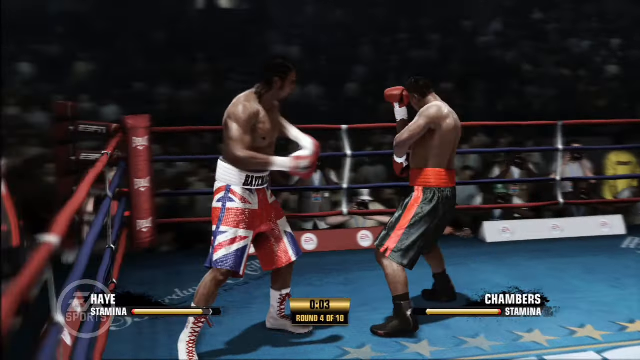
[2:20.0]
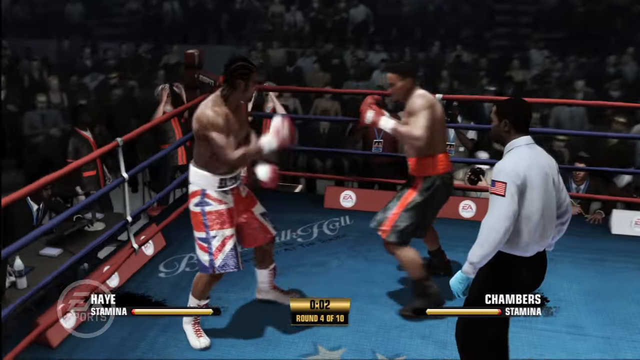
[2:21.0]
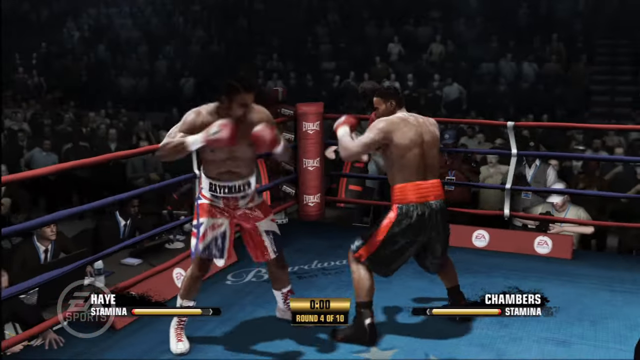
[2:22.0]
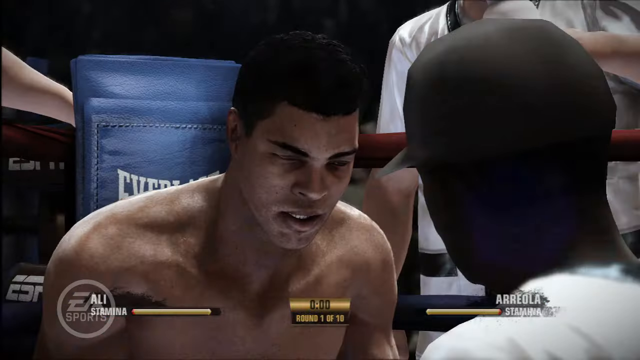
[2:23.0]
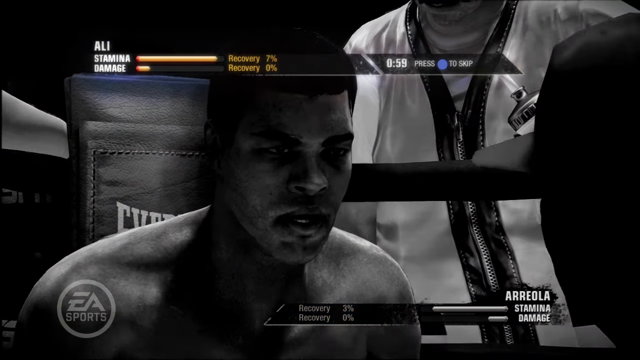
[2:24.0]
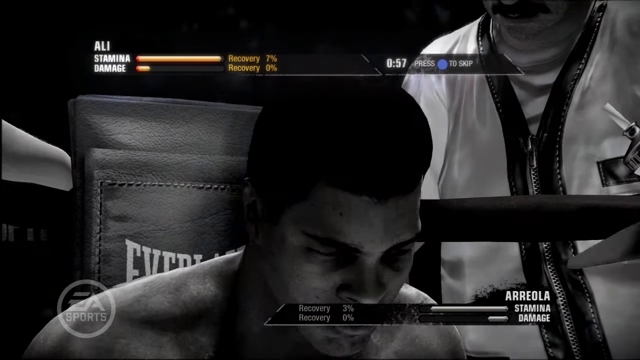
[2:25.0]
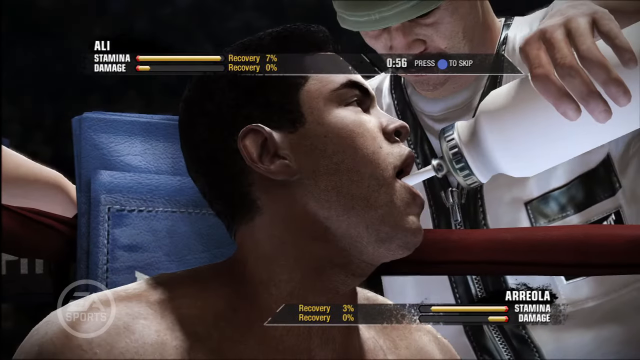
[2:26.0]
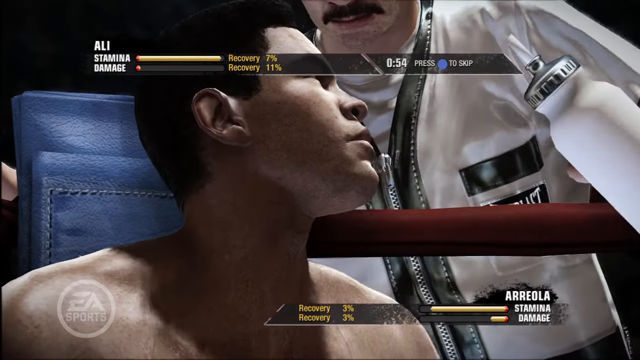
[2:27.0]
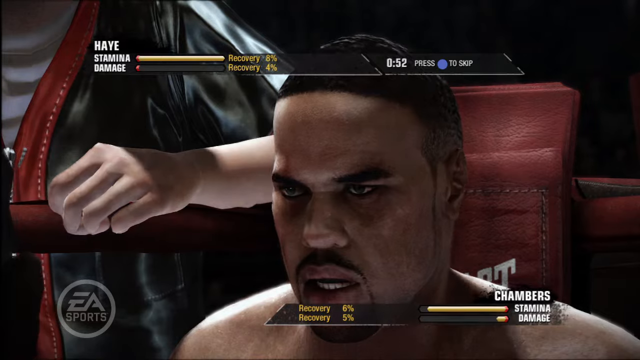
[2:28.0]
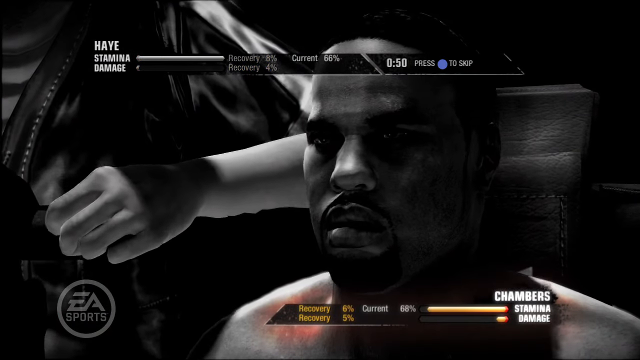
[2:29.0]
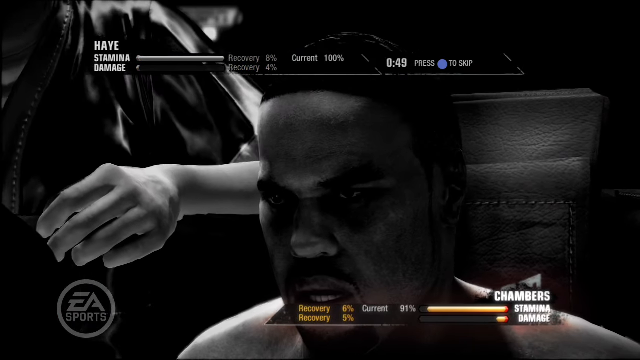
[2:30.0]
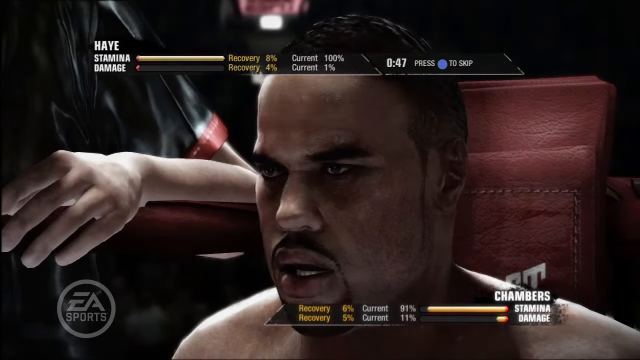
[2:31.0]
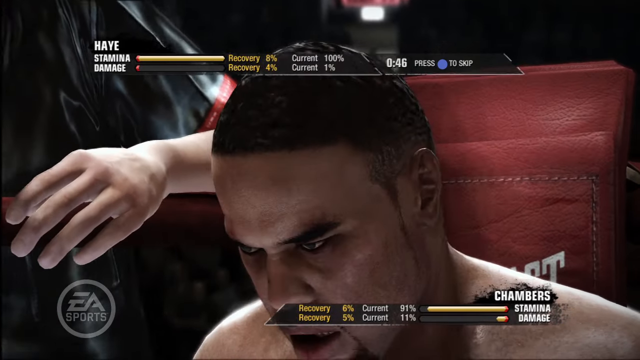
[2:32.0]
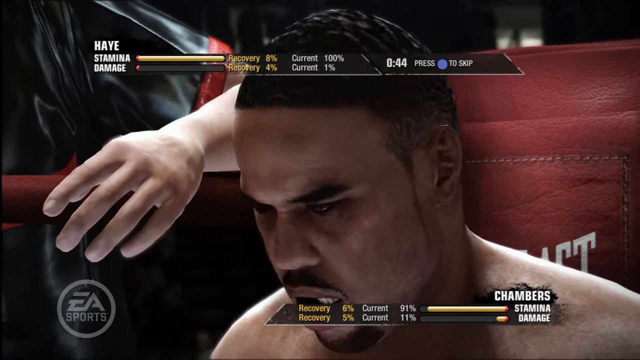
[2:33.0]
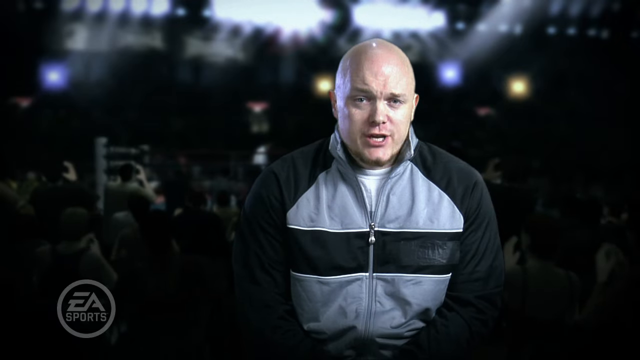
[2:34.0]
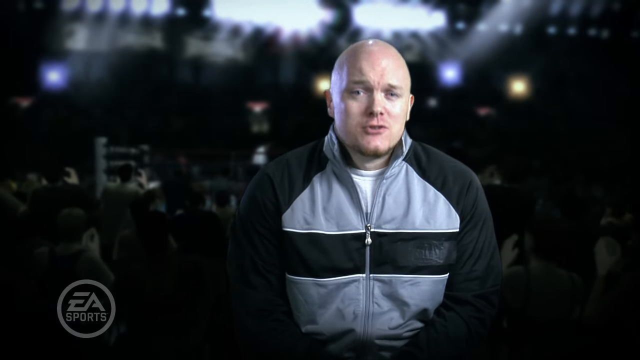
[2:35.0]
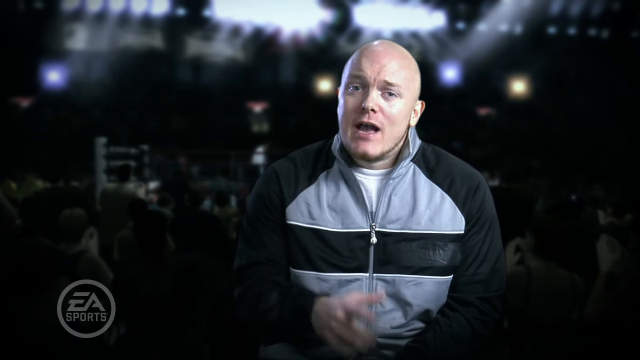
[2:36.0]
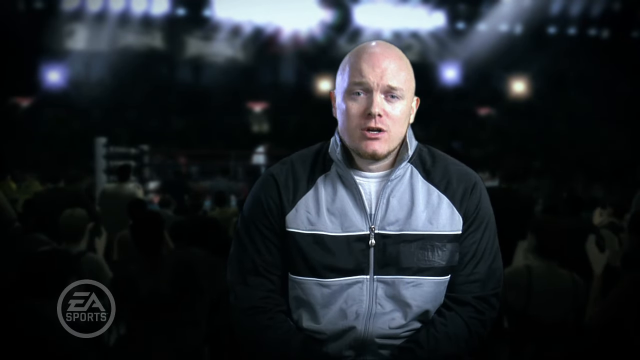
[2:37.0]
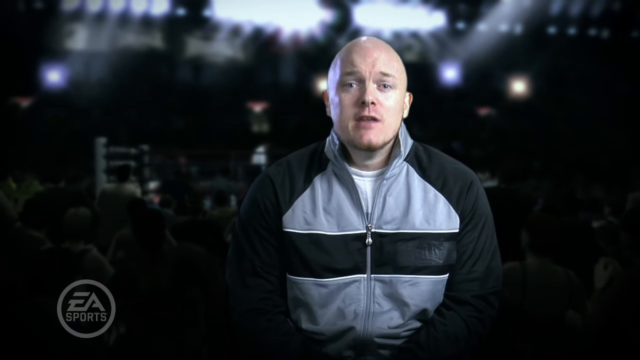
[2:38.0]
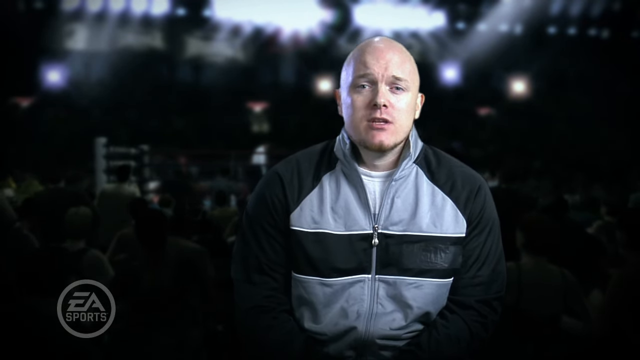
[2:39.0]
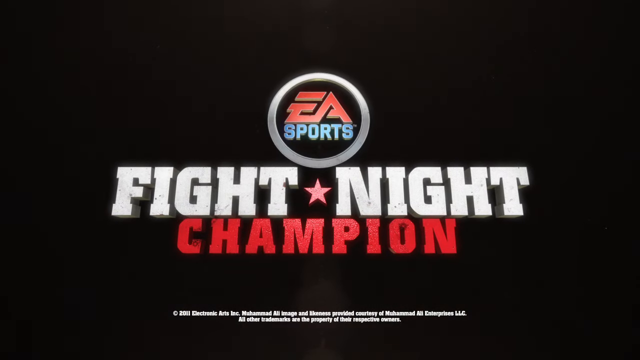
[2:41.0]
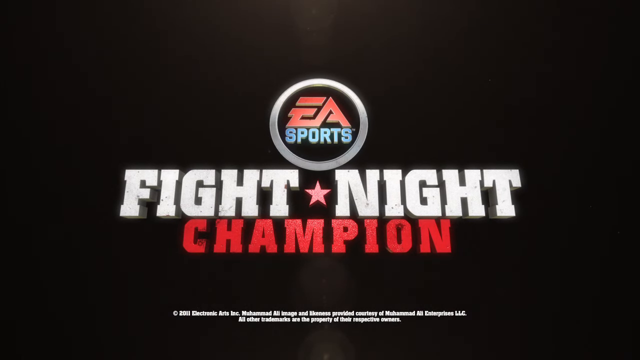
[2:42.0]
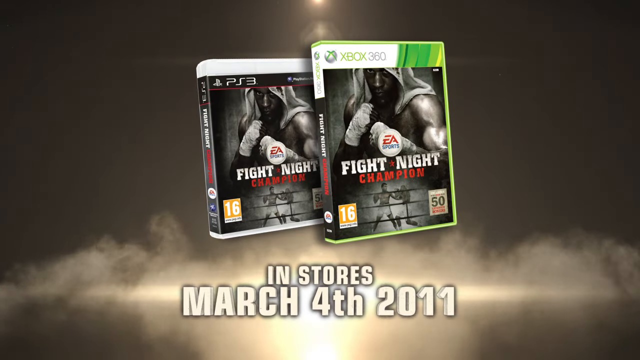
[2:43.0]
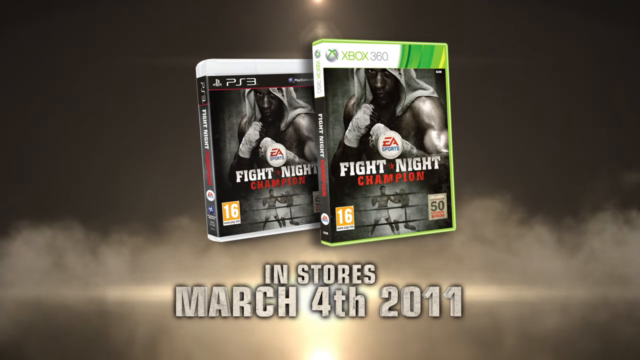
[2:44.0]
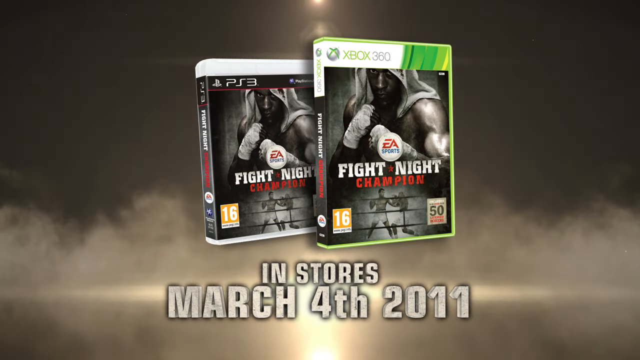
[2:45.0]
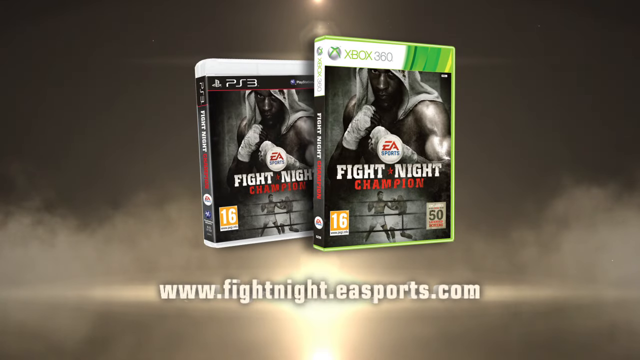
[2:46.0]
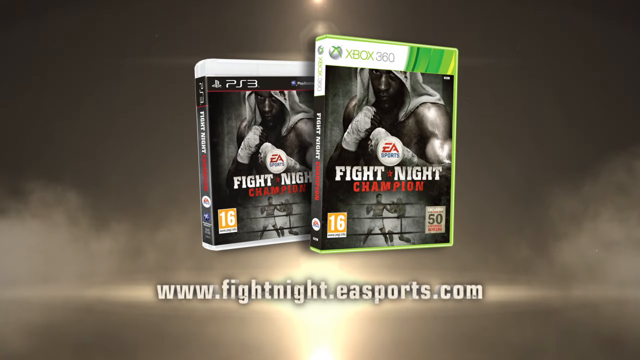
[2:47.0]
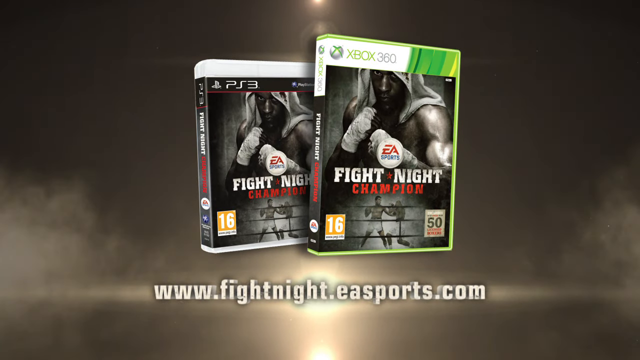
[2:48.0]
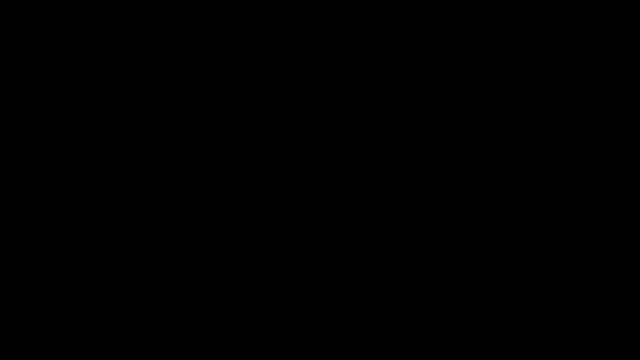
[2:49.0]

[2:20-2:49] The last moments of a fight show the man in the British pants fighting the player in black pants with stripes. The fight then appears to end, and statistics appear on screen, each with its own bar. The name "Ali" appears with stamina recovery at 7%, damage recovery at 11%, current stamina at 100% and current damage at 1%. The bottom shows the other player, "Chambers", with the same statistics: stamina 91%, recovery 6%, current damage 11%, recovery 5%. The video then returns to Brian Hayes speaking, in the zip-up jacket with black shoulders, gray front and black stripe across the chest. The game's title flashes on screen, "EA Sports Fight Night Champion", with a star logo between the words "Fight" and "Night". Two images of copies of the game follow, one for PlayStation 3 and one for Xbox 360, with text below reading "In stores March 4th, 2011" and smoke in the background. Text at the bottom reads "www.fightnight.ea.sports.com".